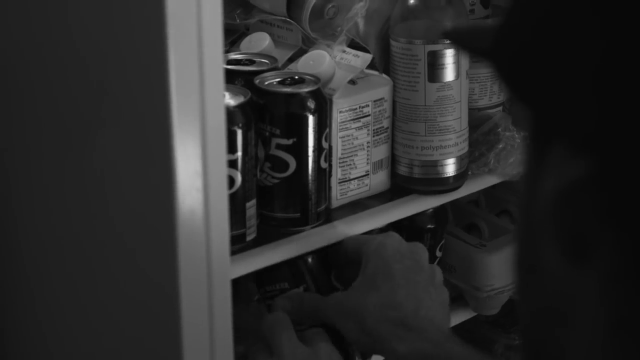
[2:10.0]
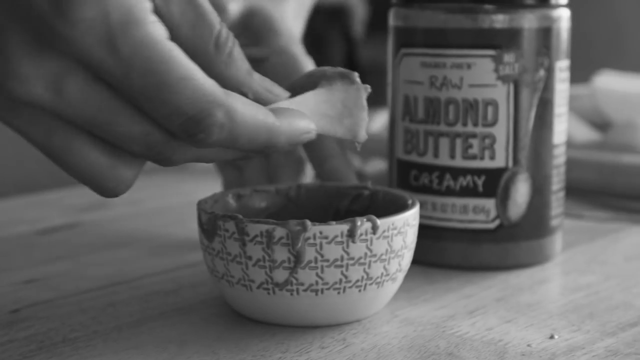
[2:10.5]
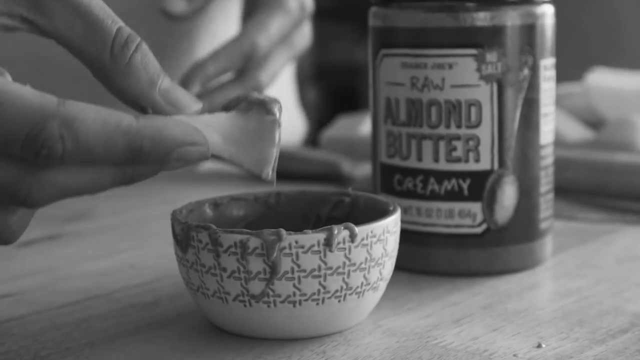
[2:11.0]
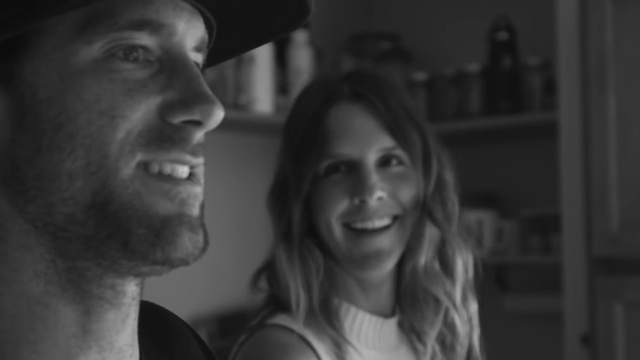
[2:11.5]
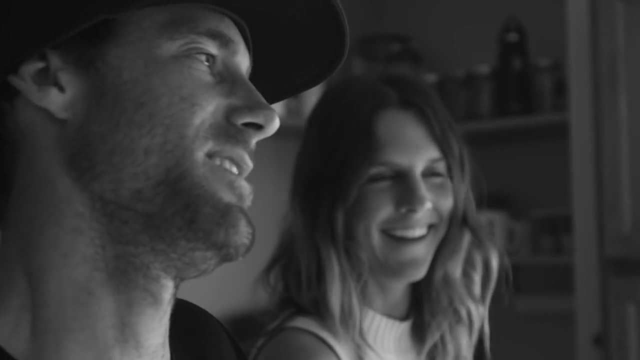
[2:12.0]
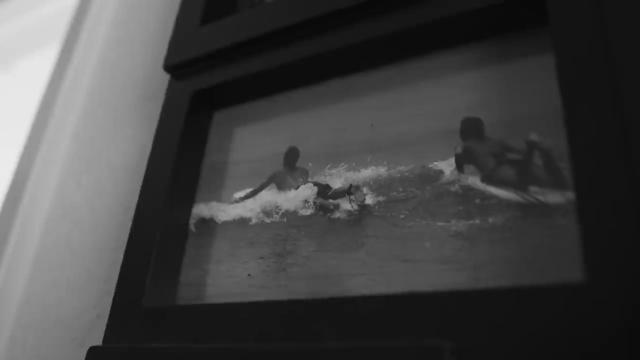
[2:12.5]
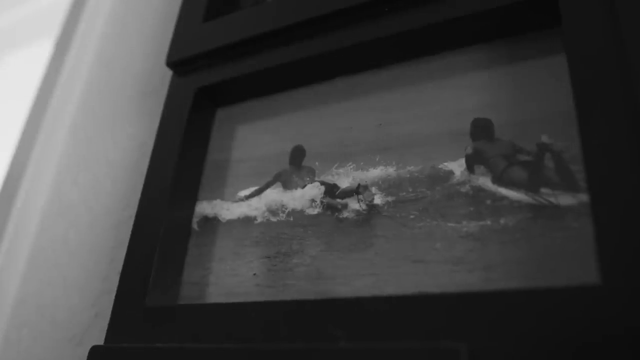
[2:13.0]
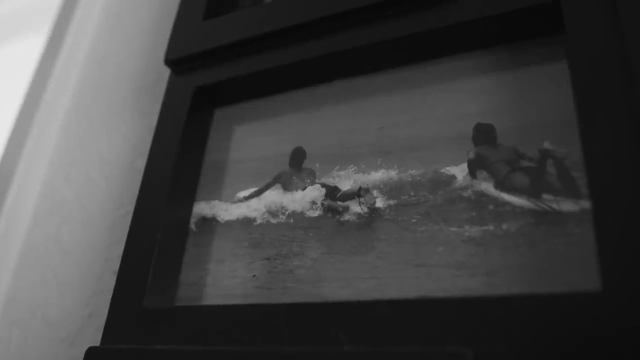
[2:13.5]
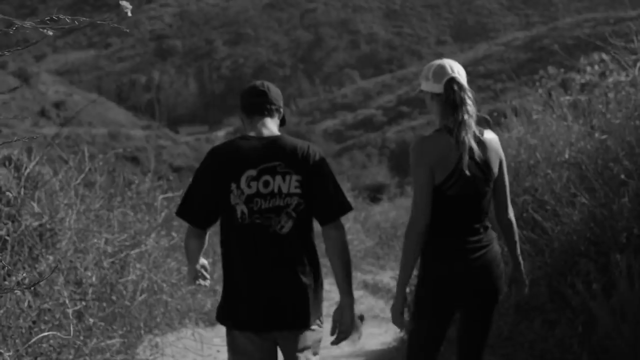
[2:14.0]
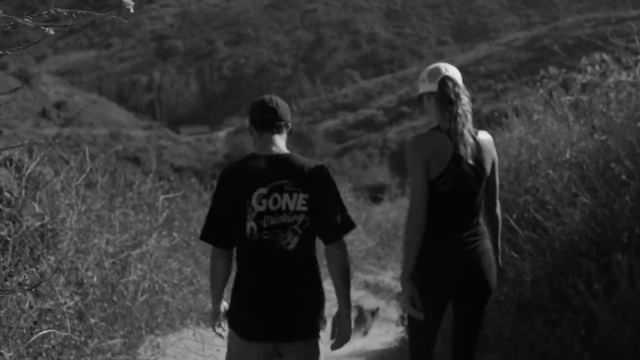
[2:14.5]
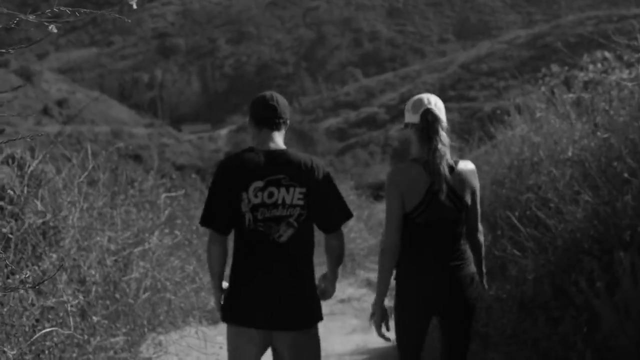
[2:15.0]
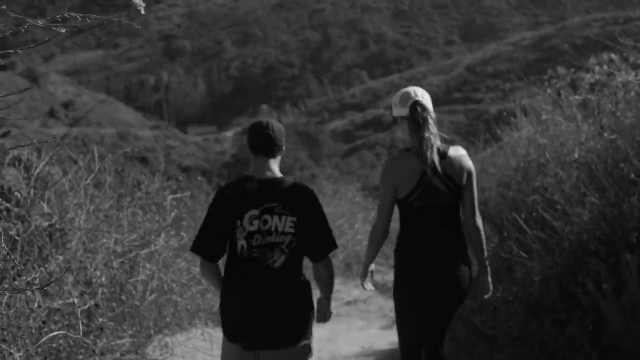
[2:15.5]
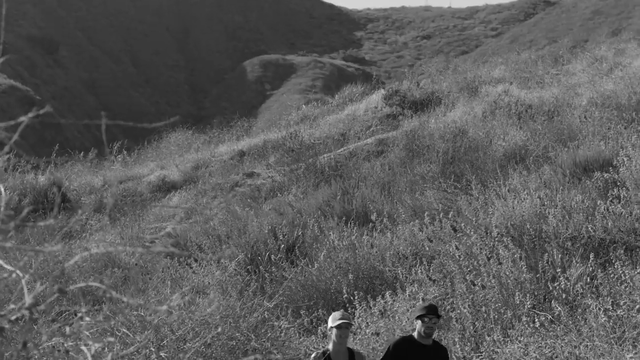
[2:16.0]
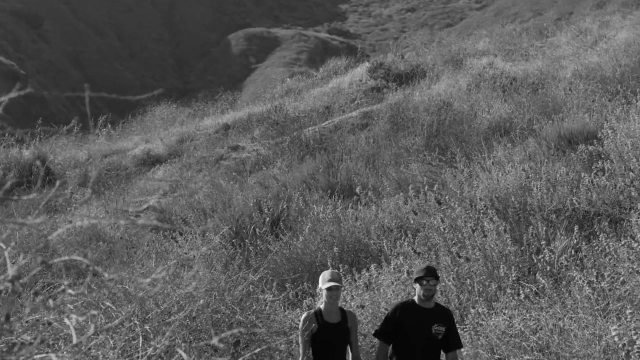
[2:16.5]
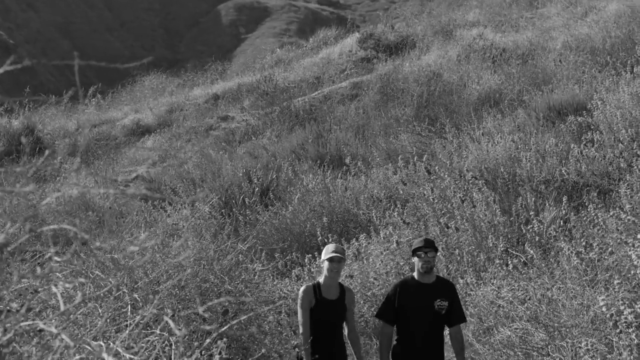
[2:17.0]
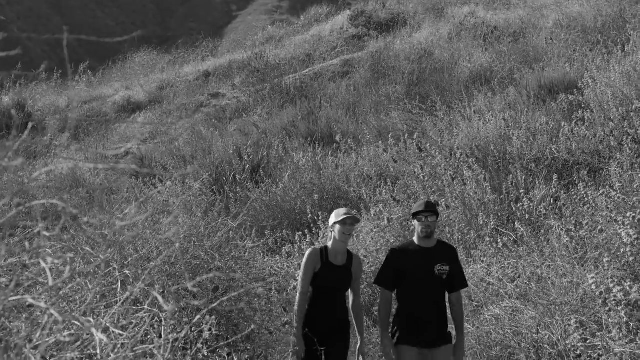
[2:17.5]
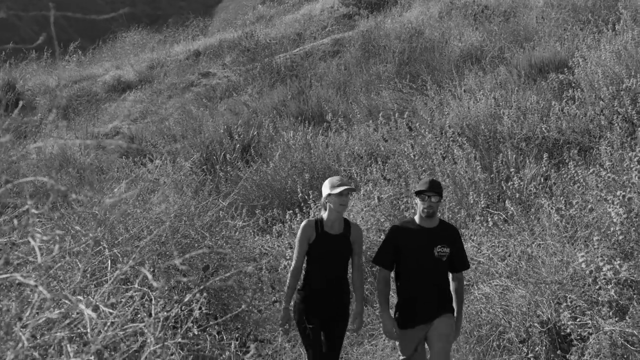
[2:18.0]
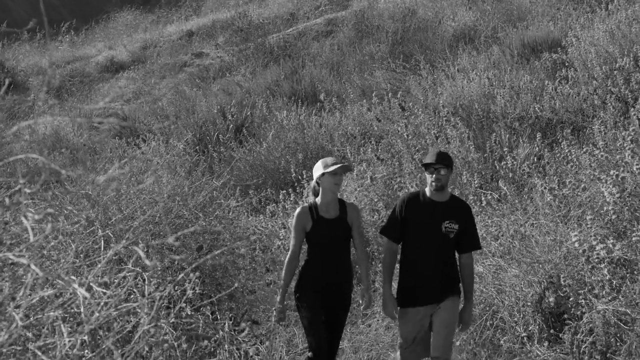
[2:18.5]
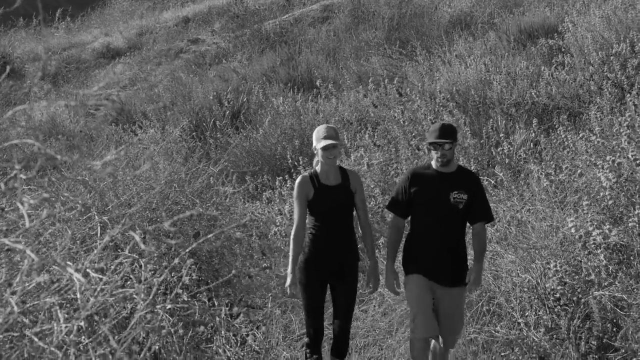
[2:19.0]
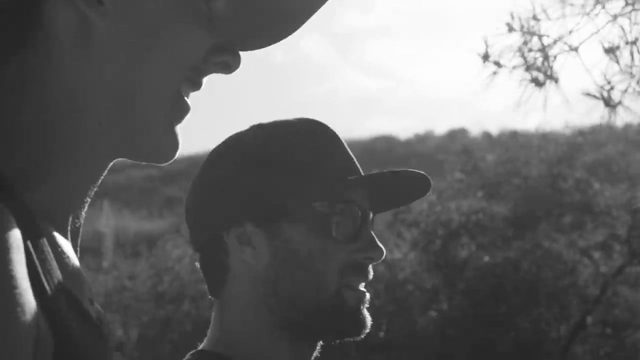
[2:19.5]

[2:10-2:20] In a kitchen cupboard, a man organizes cans of 805 beer on a shelf about three and a half feet off the ground. A man dips a vegetable into a bowl of peanut butter; a jar of raw almond butter, creamy, is on the other side of the bowl, all on top of a table. The man and his girlfriend sit talking, laughing and looking at each other; the man wears a baseball cap. A picture on the wall shows two people surfing, apparently a male on the left and a female on the right, both very tanned, he in shorts and she in a bikini, seen from a distance so their faces are not visible. The boyfriend and girlfriend walk down a trail on a hill. His shirt is black and says "gone drinking," and he wears a black baseball cap; she wears a tank top and a white baseball cap with her hair pushed through the back. Next the camera is in front of them, watching them come down the hills.